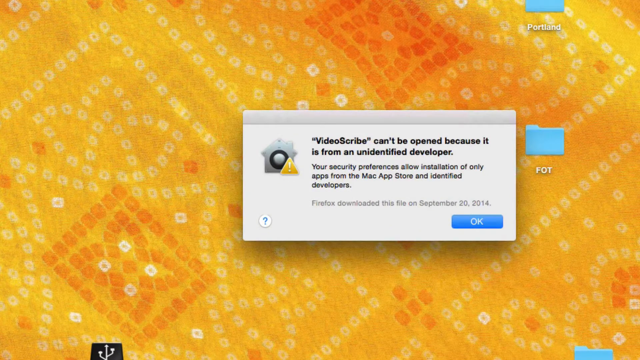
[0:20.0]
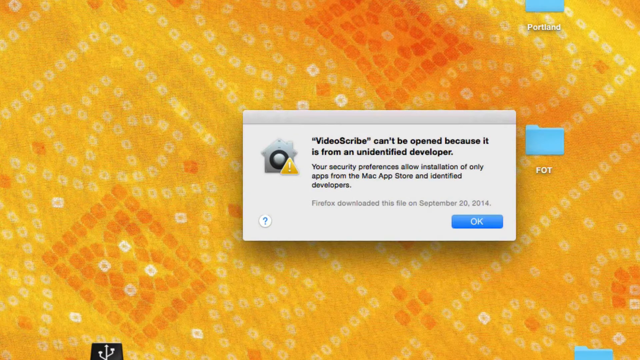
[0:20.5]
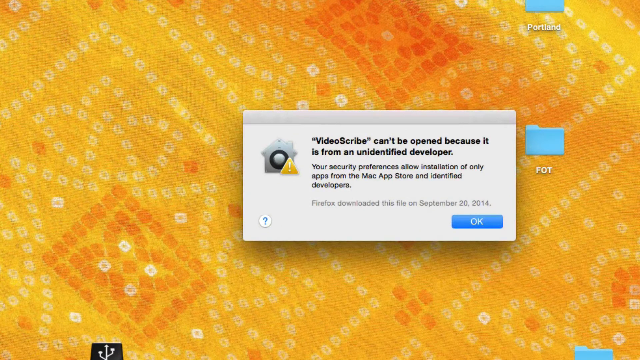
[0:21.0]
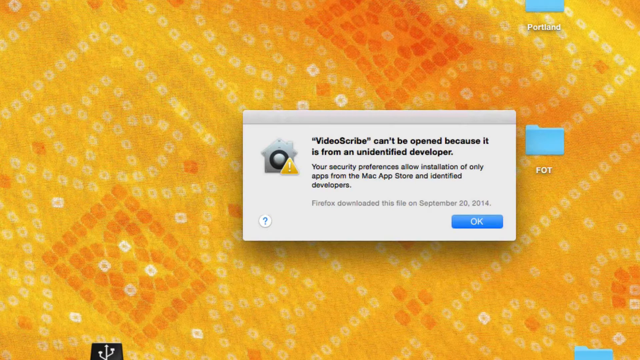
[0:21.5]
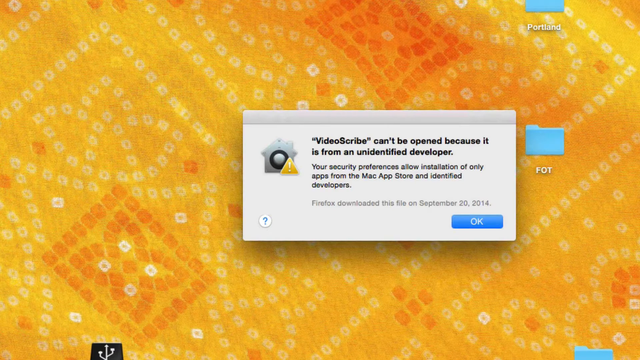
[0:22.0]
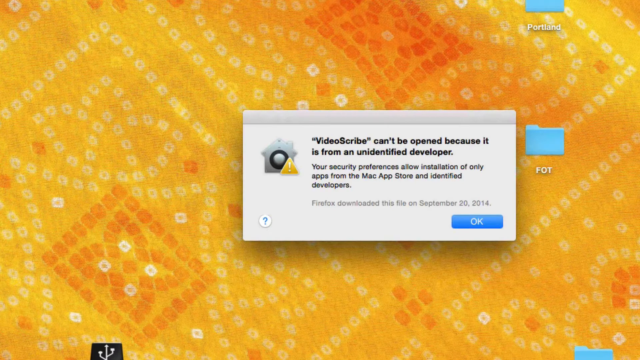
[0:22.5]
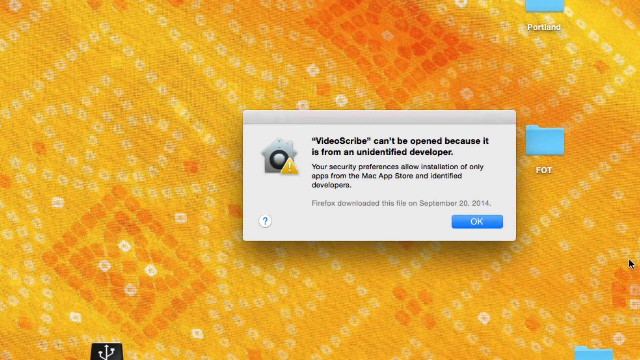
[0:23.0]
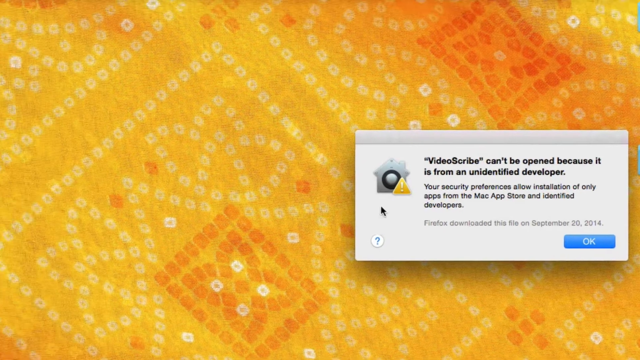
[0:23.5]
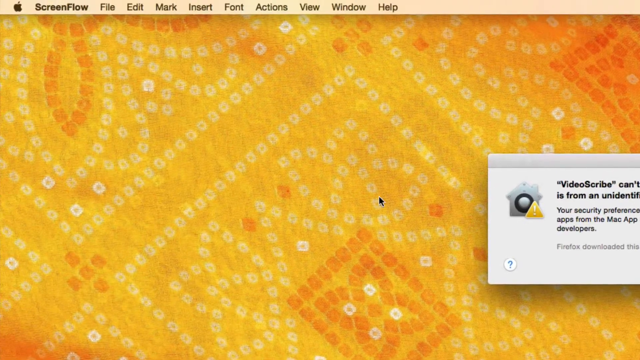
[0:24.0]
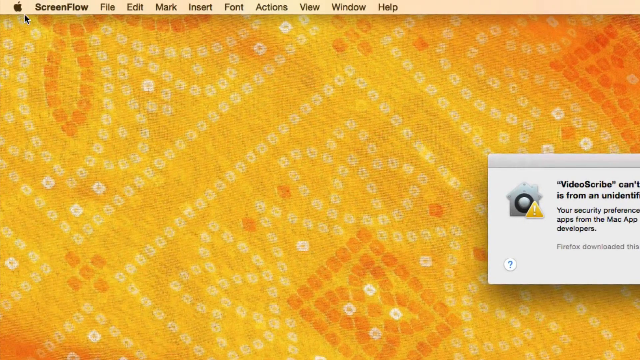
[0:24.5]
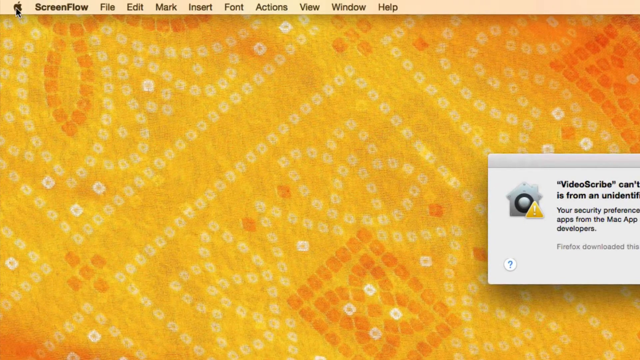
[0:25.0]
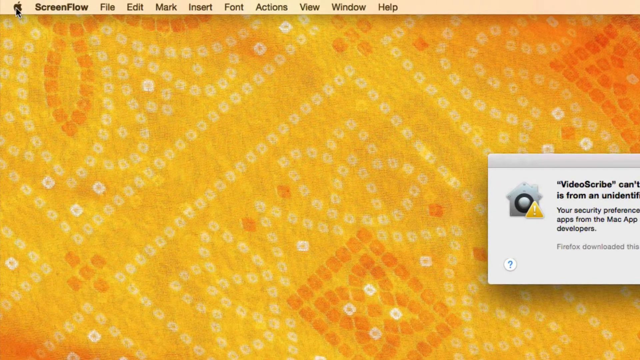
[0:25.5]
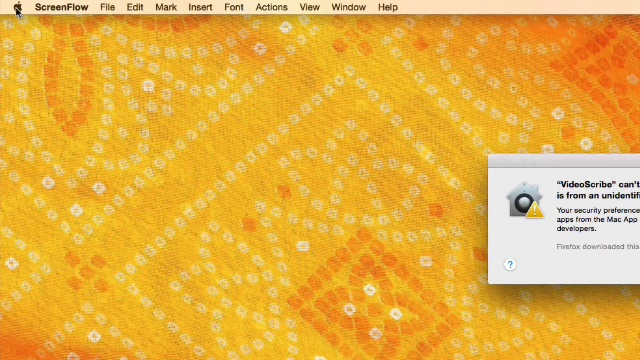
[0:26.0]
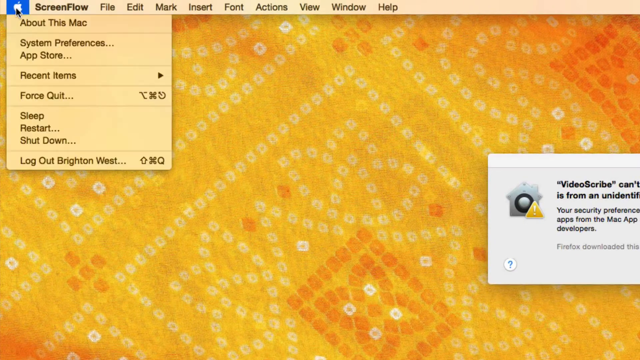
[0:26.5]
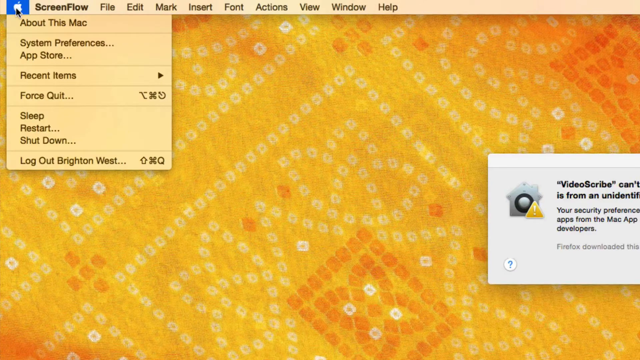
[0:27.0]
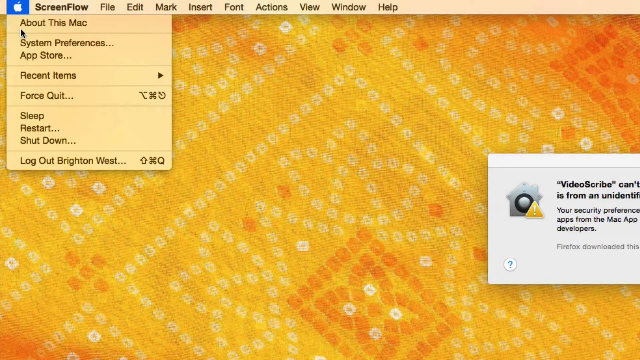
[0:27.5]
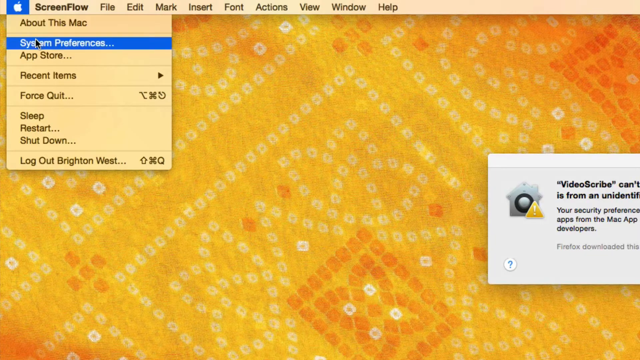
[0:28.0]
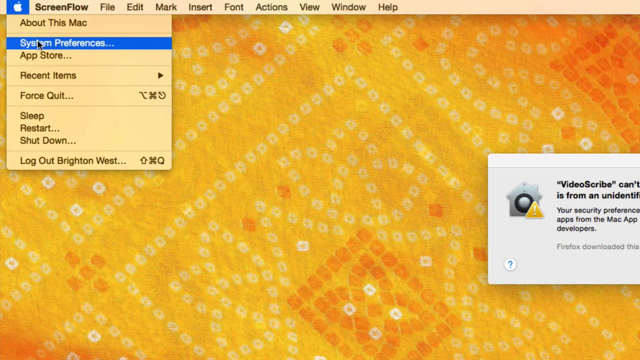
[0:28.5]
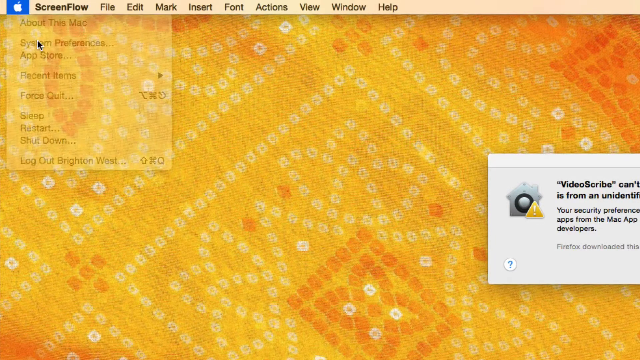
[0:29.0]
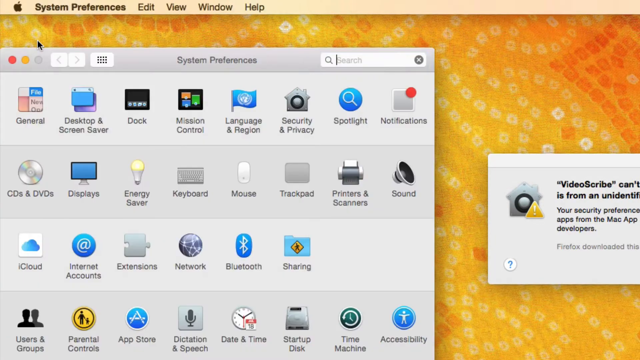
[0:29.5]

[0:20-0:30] The message about the application called VideoScribe remains on screen, saying that VideoScribe can't be opened and that "your security preference allows installation of only apps from the Mac App Store."